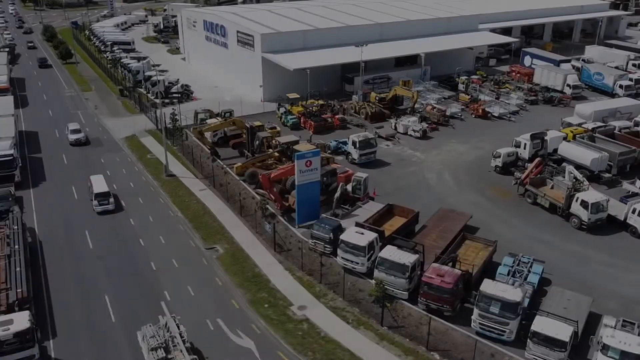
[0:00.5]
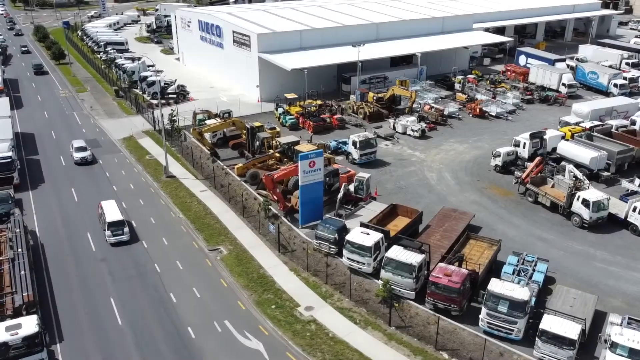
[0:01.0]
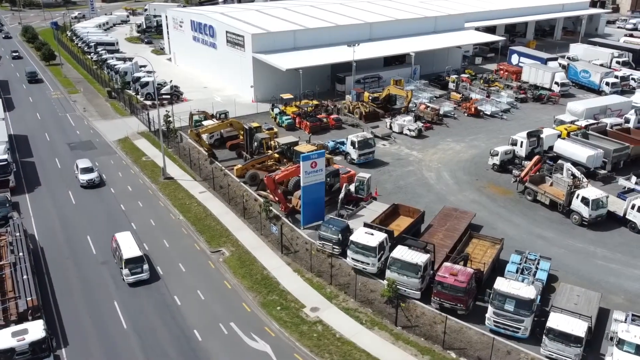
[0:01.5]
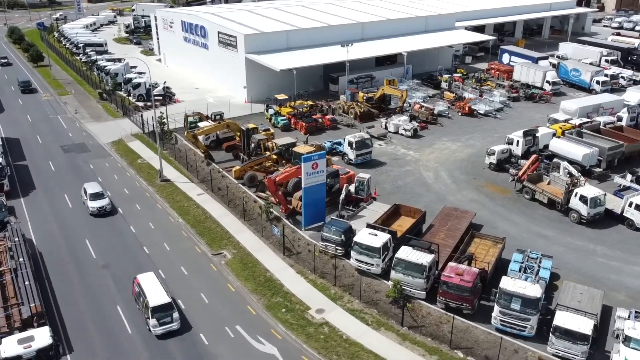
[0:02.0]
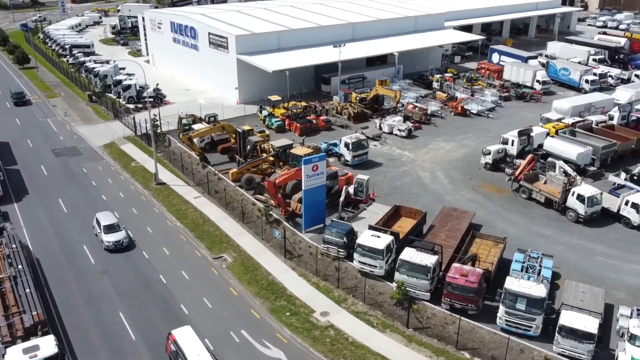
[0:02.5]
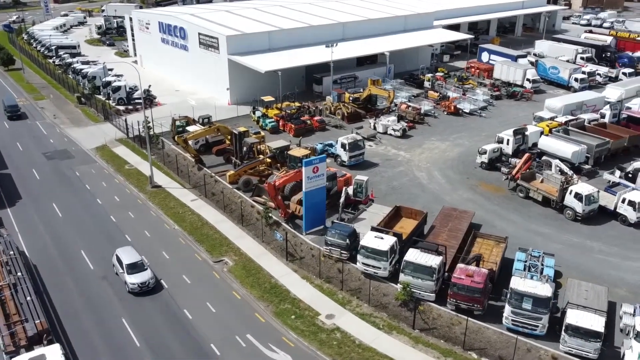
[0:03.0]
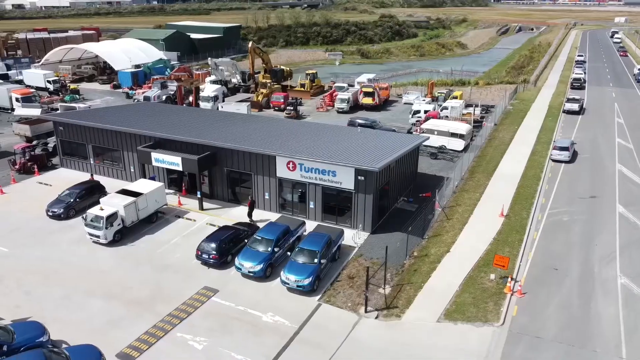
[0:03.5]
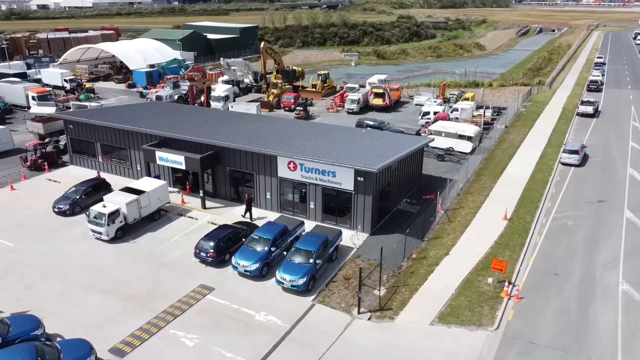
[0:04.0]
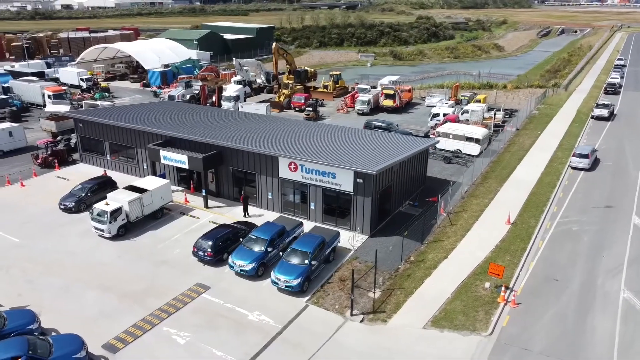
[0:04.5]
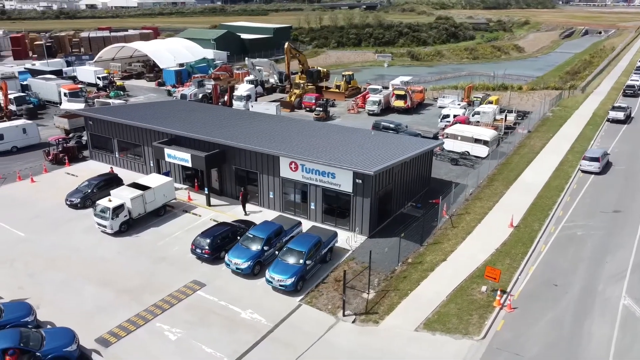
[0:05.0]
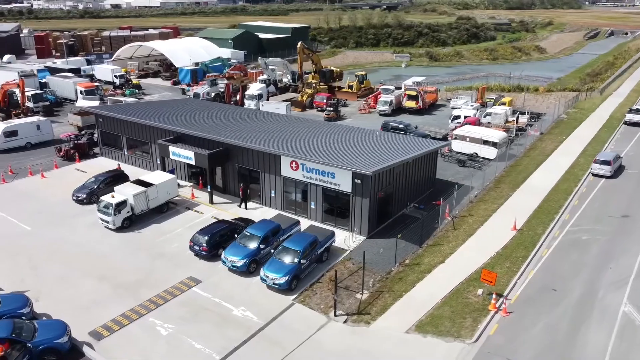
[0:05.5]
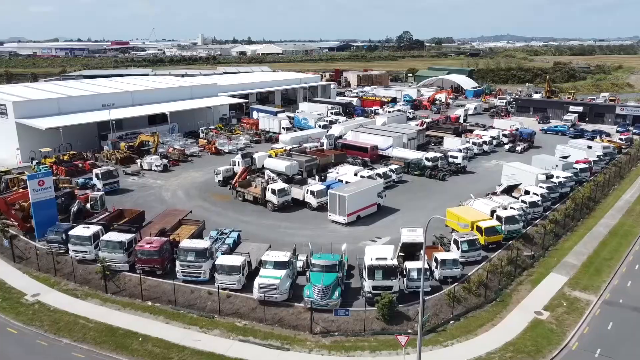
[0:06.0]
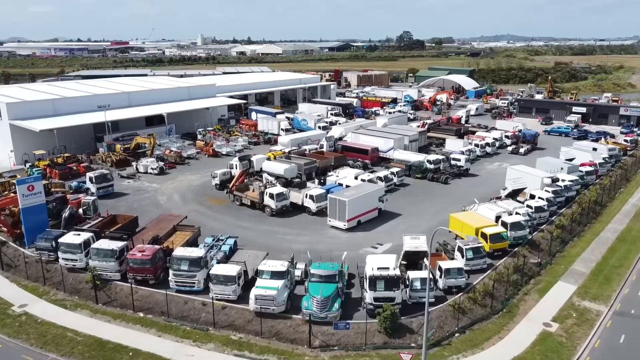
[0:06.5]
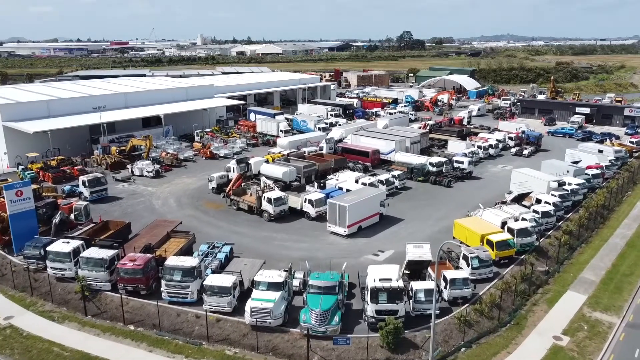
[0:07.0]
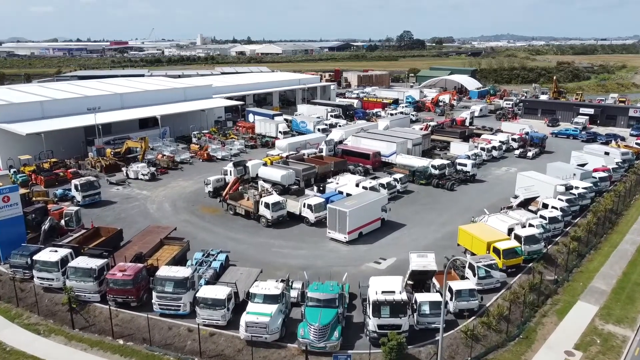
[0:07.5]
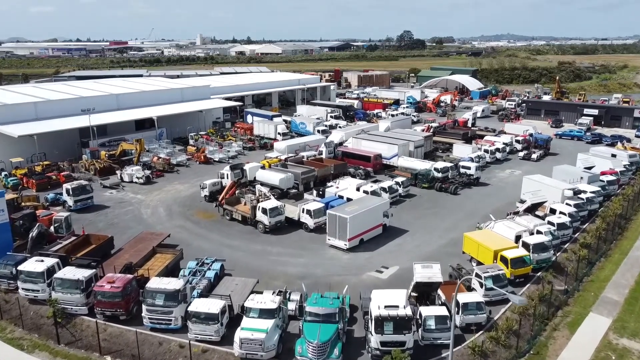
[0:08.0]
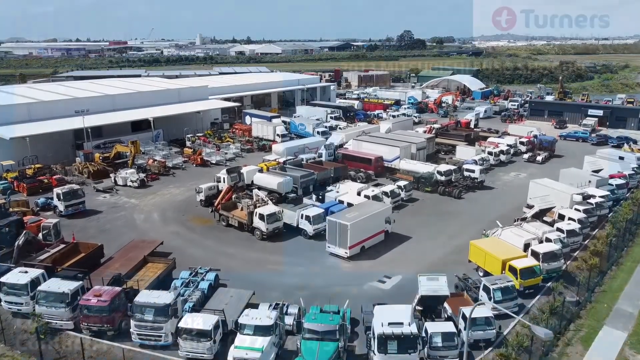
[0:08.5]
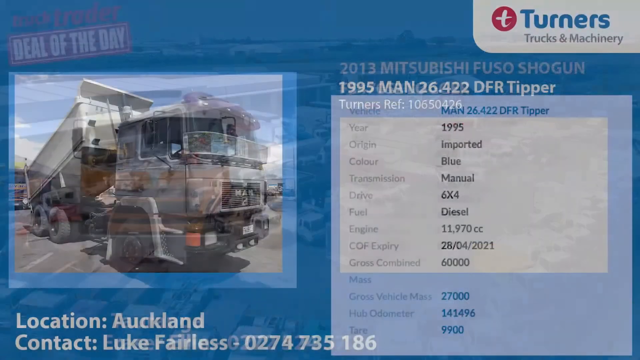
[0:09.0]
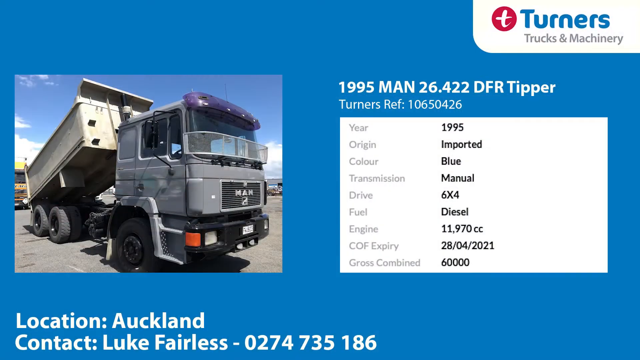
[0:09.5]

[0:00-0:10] An aerial view shows a business that looks like a scrap dealer, or maybe one that sells trucks and machinery, with a road going past. There is a building, and behind it are lots of trucks and machinery. Five cars are parked at the front of the main entrance, and a road with three lanes goes past the building. To the rear of the building are various large trucks and pieces of equipment. A sign on the front of the building says "turners". The video then cuts to a picture that says "turners".